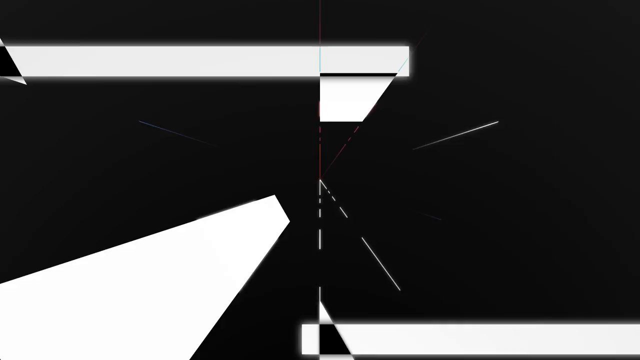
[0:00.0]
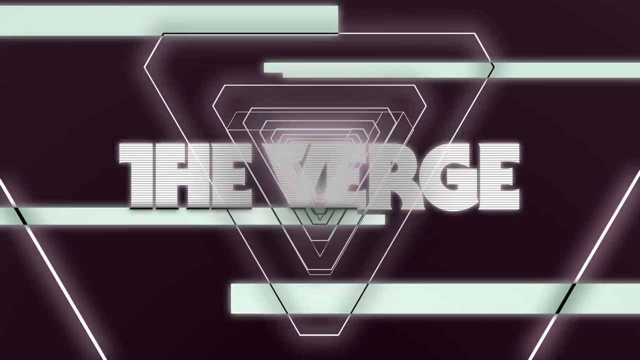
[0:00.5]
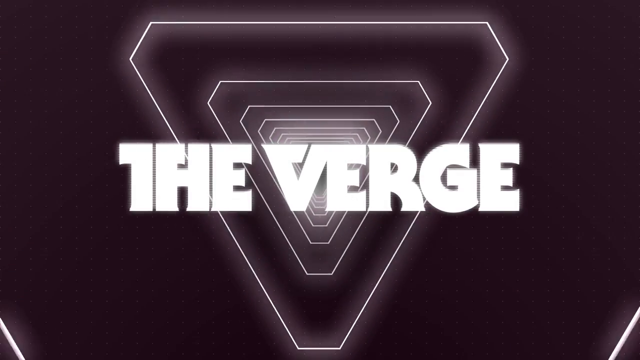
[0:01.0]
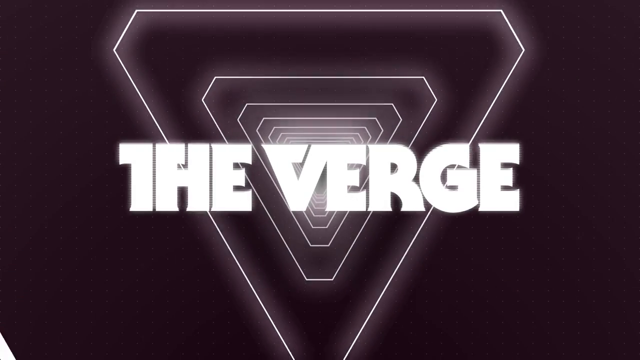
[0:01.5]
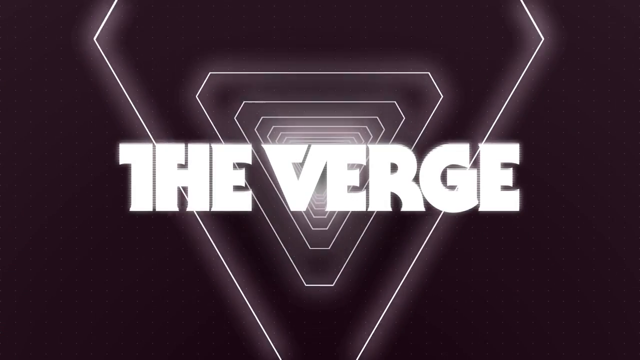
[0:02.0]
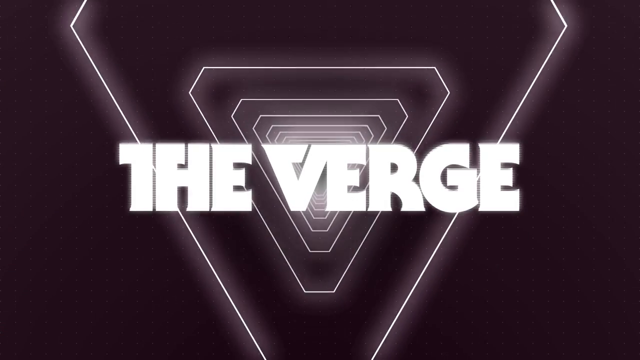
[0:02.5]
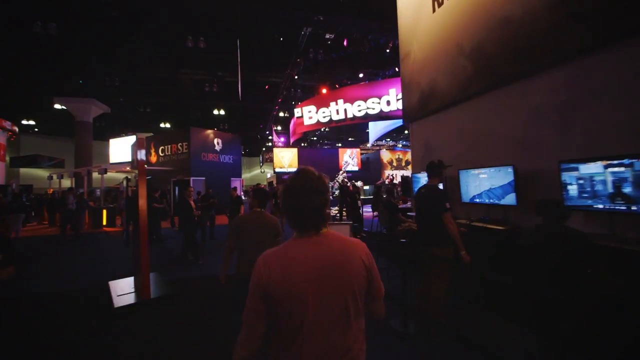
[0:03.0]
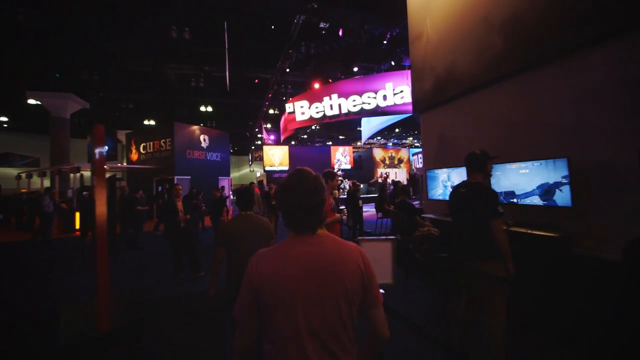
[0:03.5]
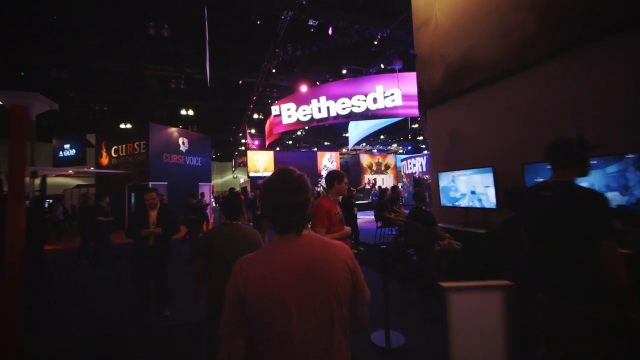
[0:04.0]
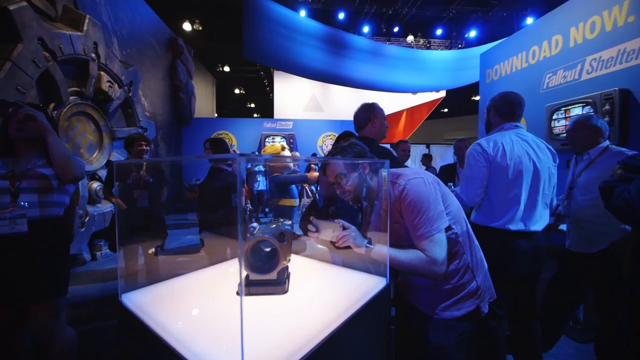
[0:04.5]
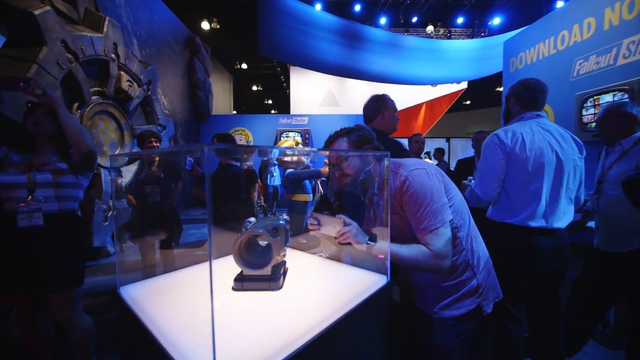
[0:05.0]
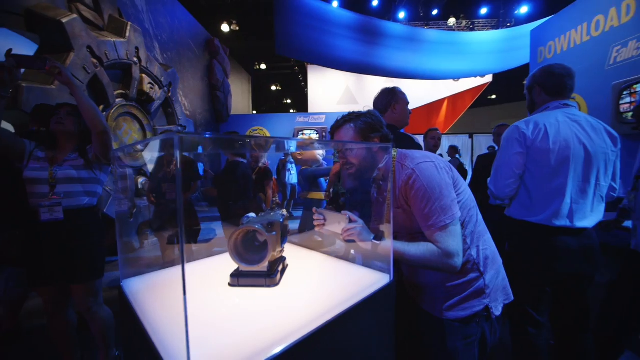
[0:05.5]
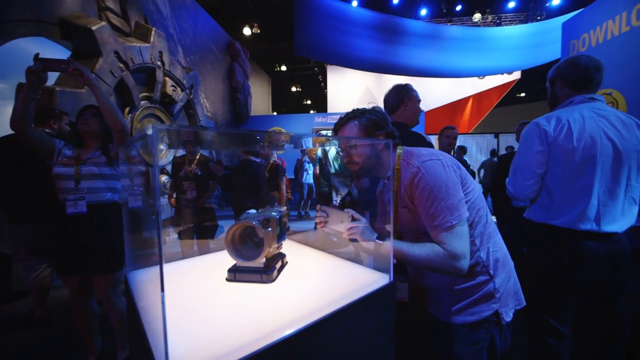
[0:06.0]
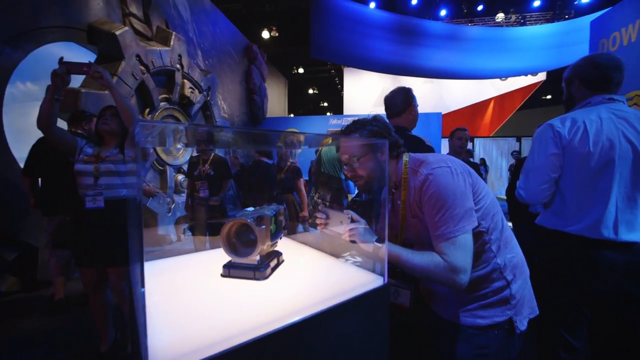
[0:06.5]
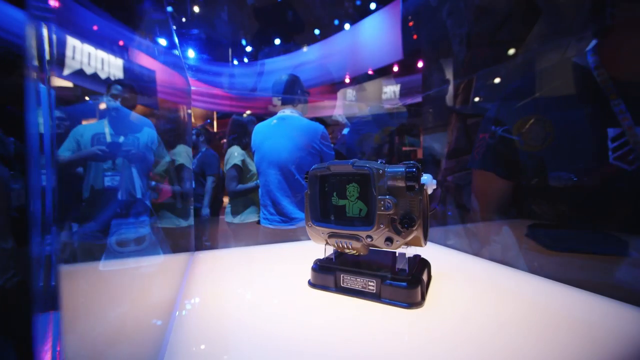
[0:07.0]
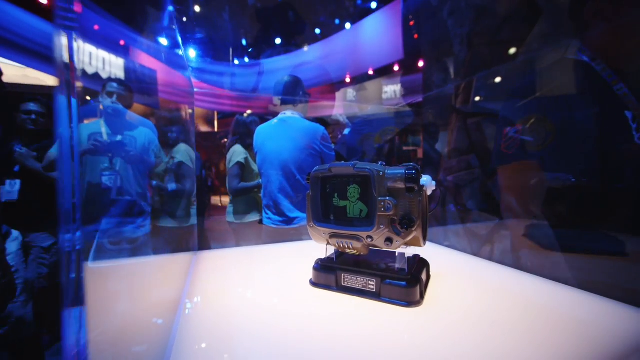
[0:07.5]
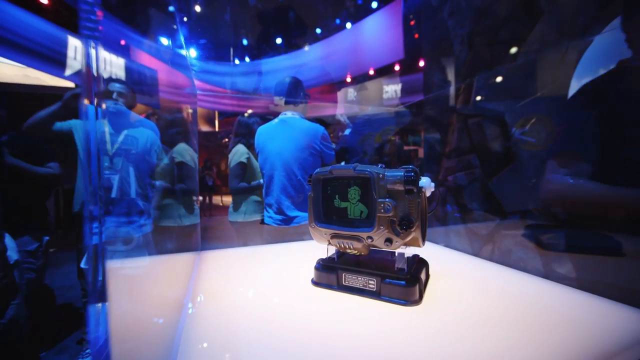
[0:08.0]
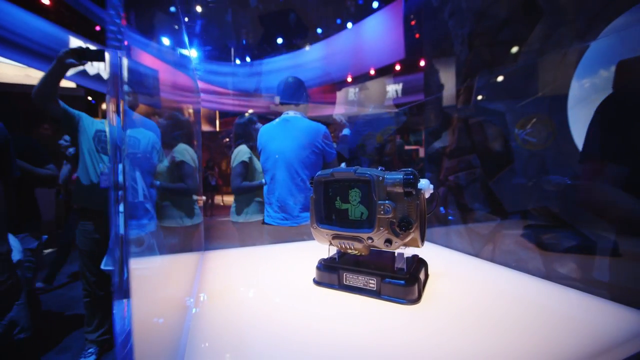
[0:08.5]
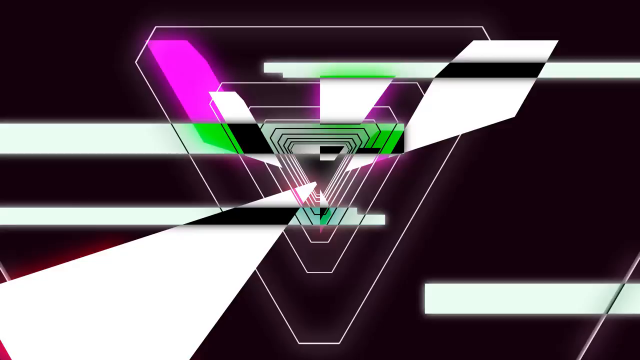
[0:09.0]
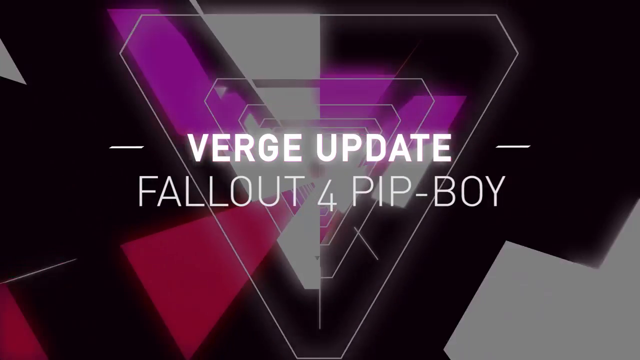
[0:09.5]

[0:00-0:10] The words "The Verge" appear with an animation, and a person walks by. "Bethesda" appears, and a man looks at a camera with a screen. The text "Verge update" and "Fallout" appear along with "The Verge" and another animation. A man in an orange shirt walks, and another man bends over taking a photo of a camera with a green character. "Fallout for Pip-Boy" and "The Verge" appear, followed by an animation that looks like a diamond and "Bethesda". A man in a blue shirt is shown, and there is a camera in a clear box. A woman in a striped shirt takes a picture, and a man in a white shirt wearing a lanyard also takes a picture. A diamond appears again with "The Verge", and a man in a blue shirt talks to another man. There is a man wearing a lanyard, a man walking in an orange shirt, a woman in a striped shirt, and a man taking a picture. The Bethesda neon sign is shown, and a woman in a yellow shirt talks to a man. "The Verge", a diamond, and "Verge update" and "Fallout" appear.